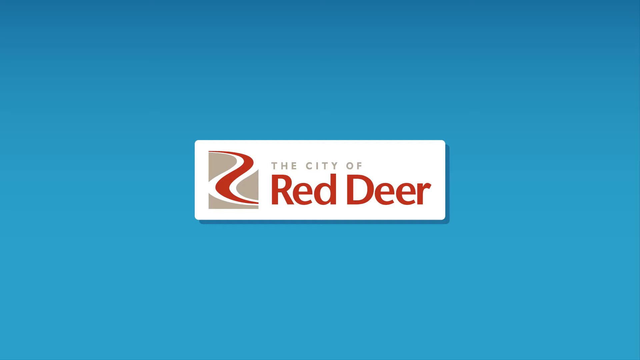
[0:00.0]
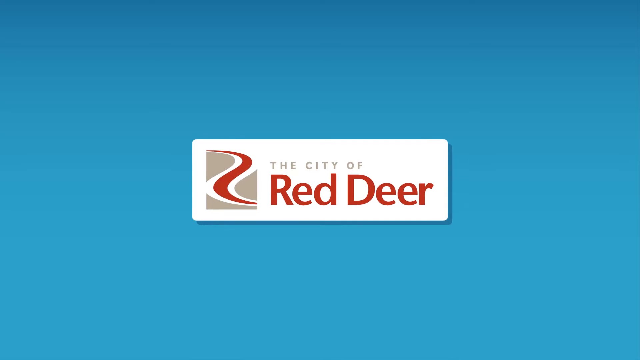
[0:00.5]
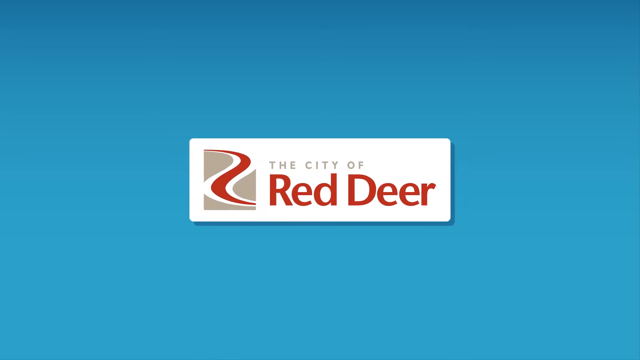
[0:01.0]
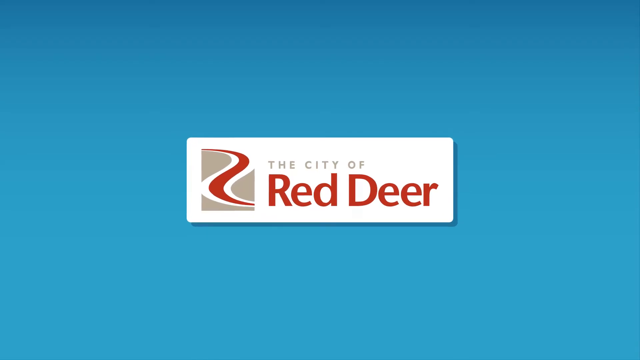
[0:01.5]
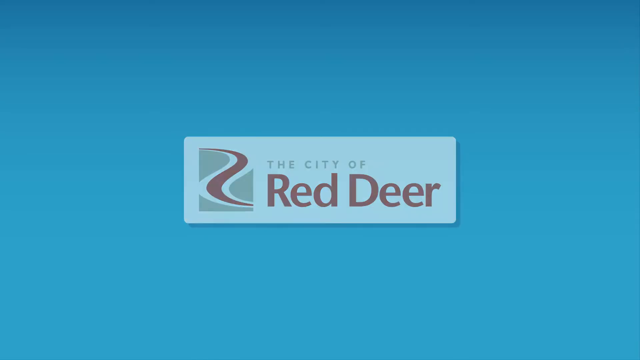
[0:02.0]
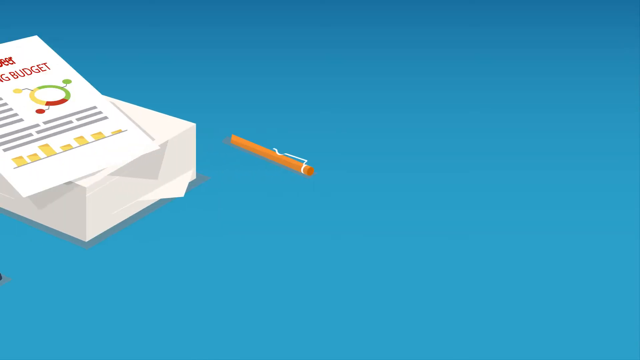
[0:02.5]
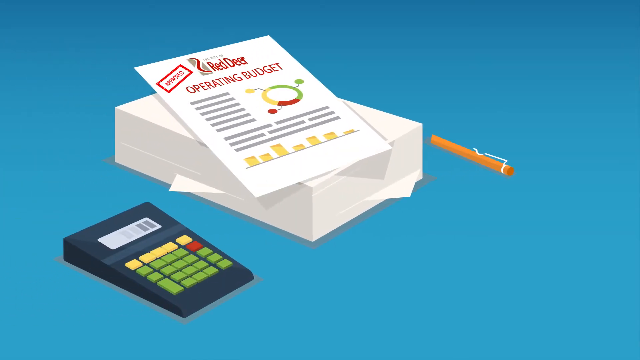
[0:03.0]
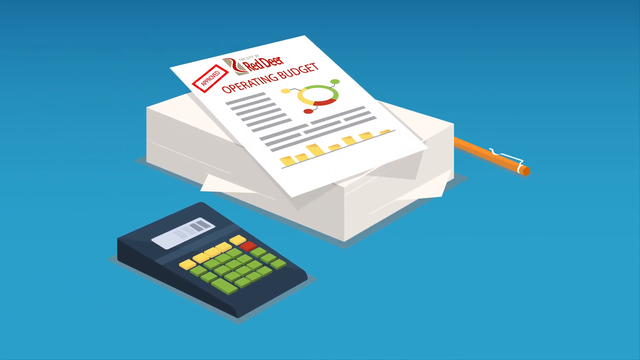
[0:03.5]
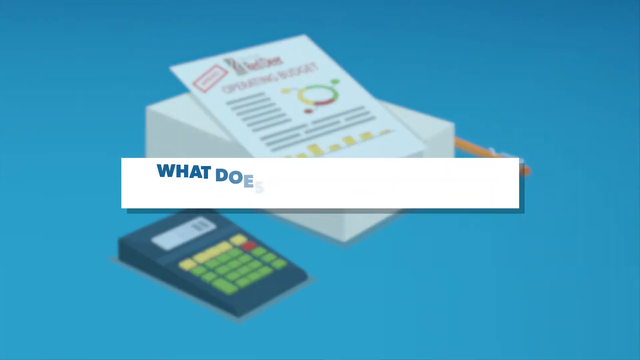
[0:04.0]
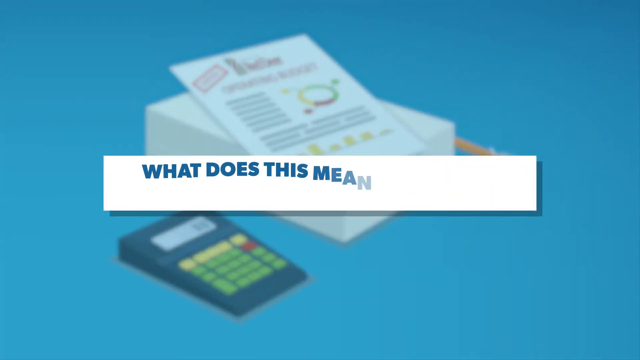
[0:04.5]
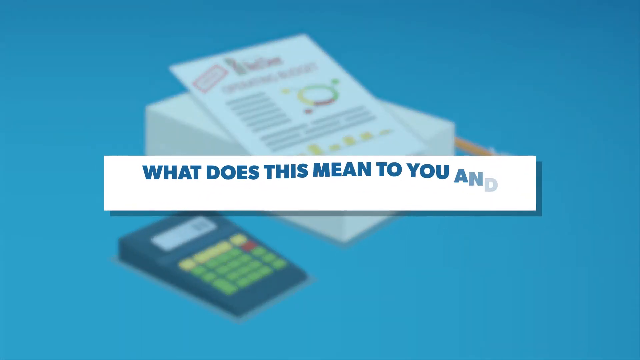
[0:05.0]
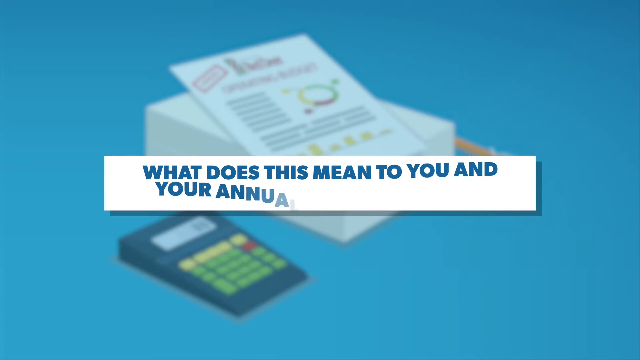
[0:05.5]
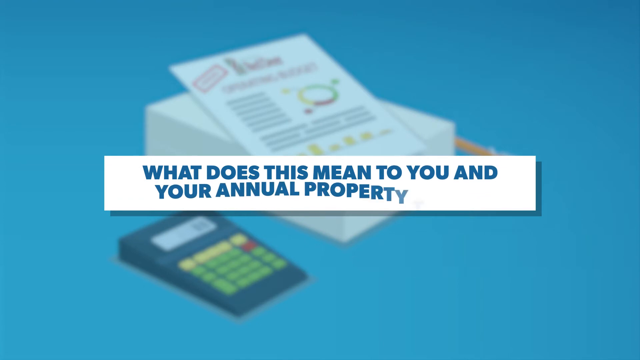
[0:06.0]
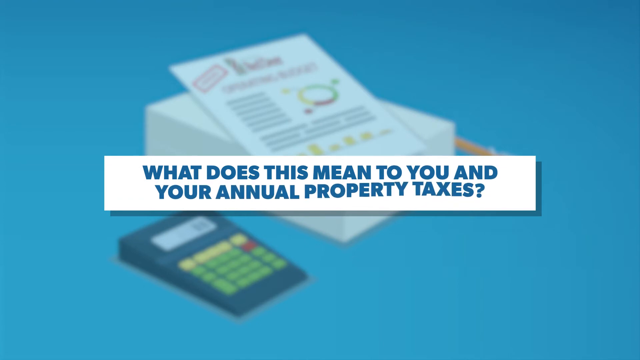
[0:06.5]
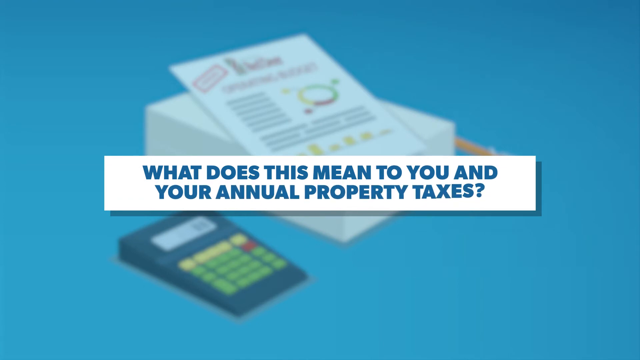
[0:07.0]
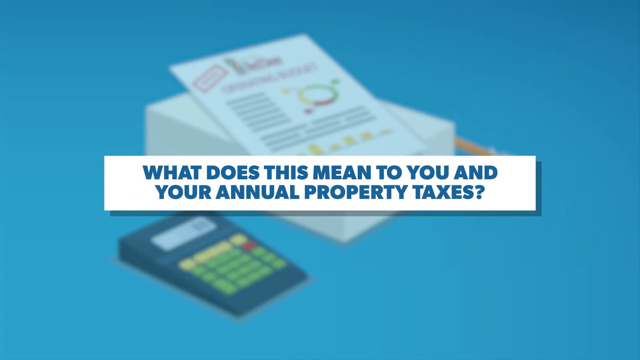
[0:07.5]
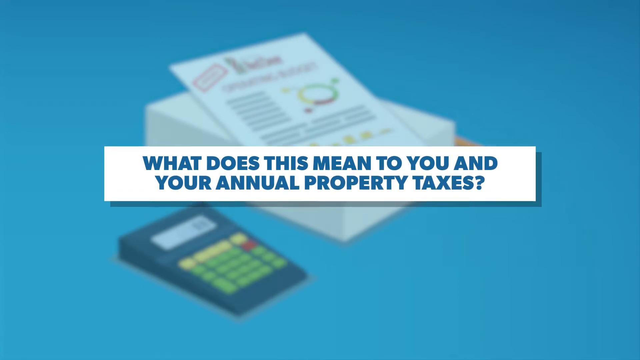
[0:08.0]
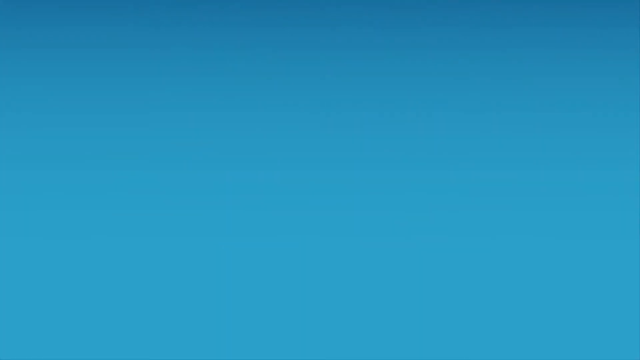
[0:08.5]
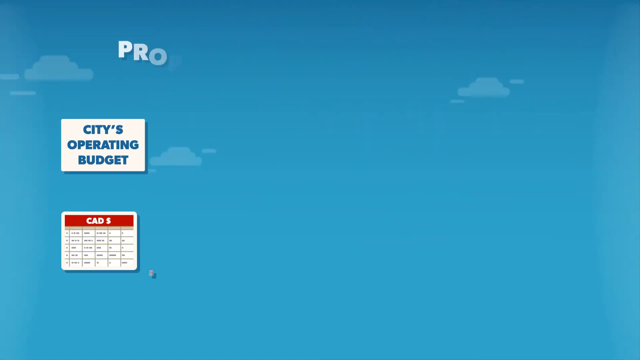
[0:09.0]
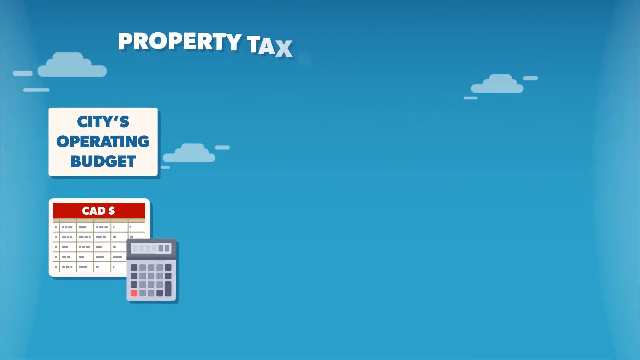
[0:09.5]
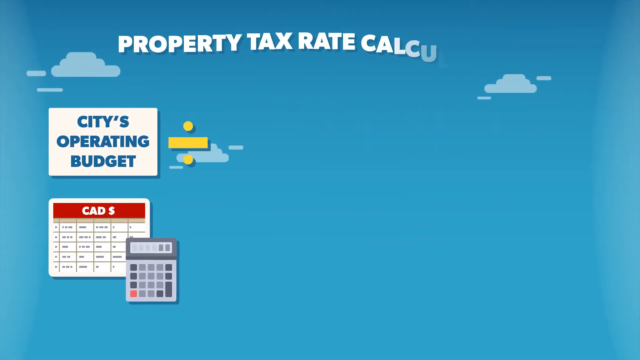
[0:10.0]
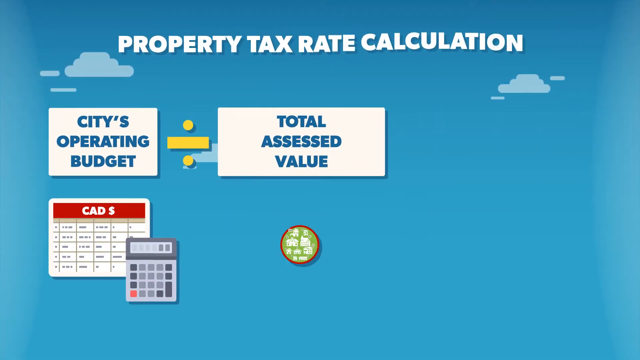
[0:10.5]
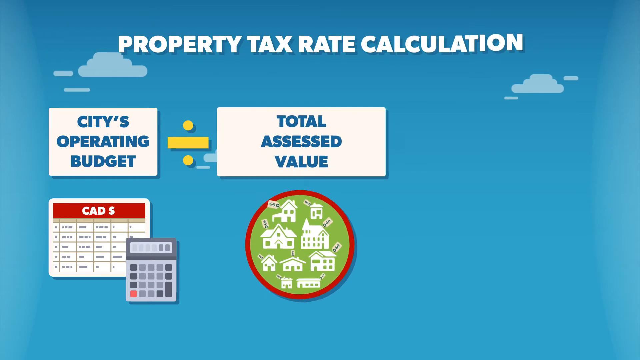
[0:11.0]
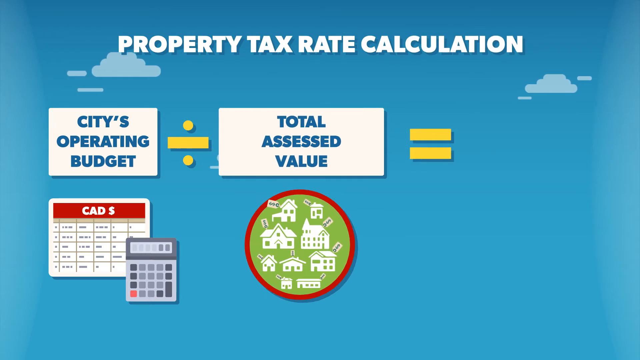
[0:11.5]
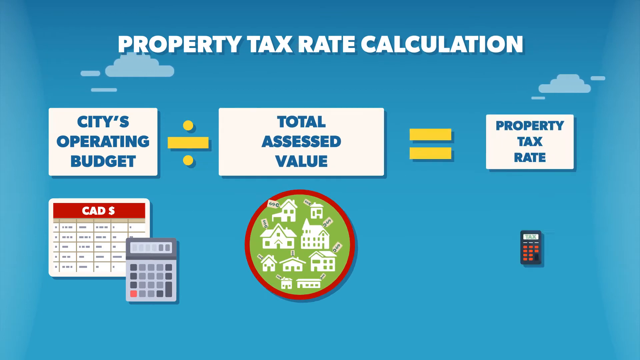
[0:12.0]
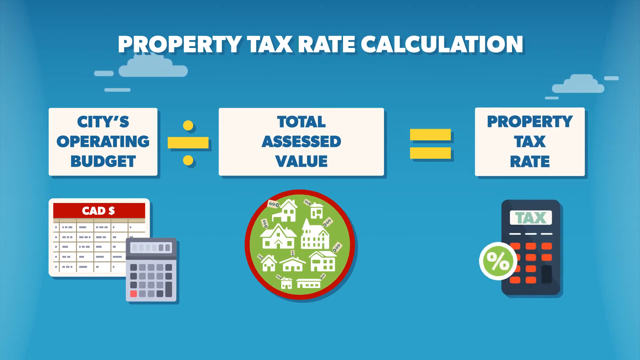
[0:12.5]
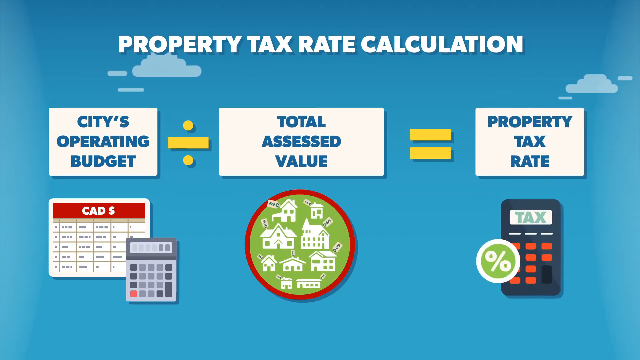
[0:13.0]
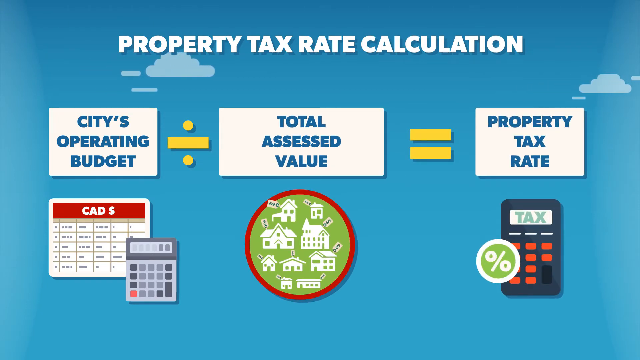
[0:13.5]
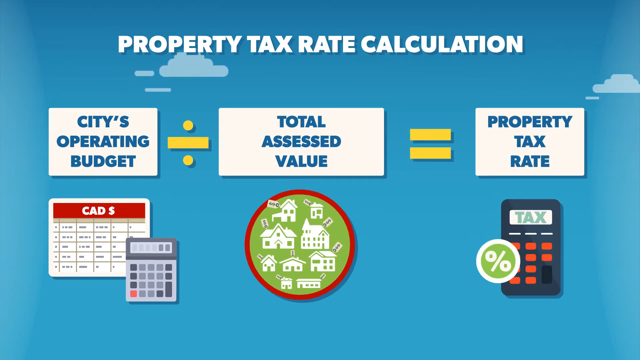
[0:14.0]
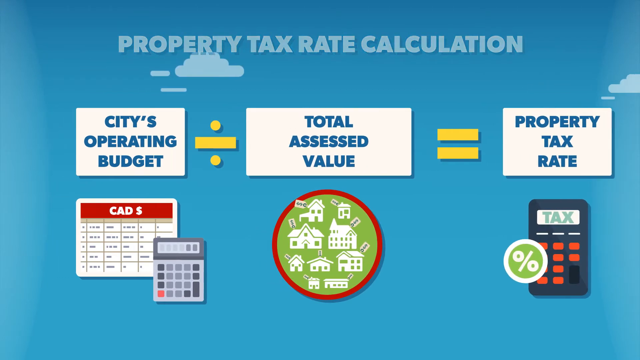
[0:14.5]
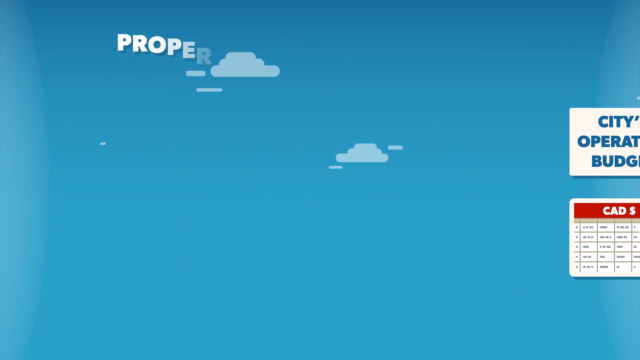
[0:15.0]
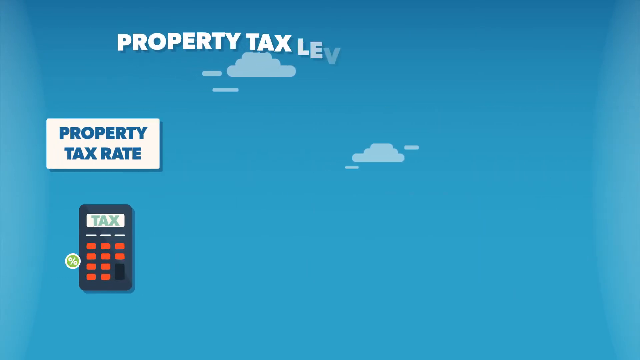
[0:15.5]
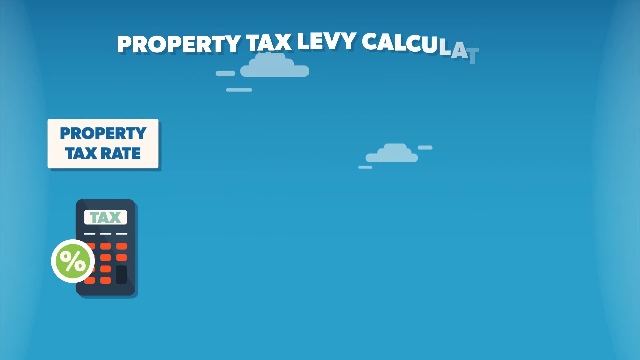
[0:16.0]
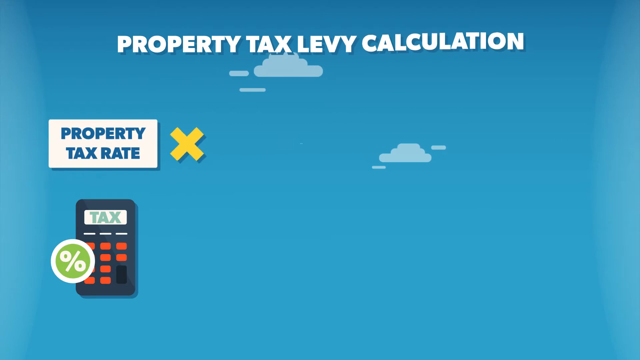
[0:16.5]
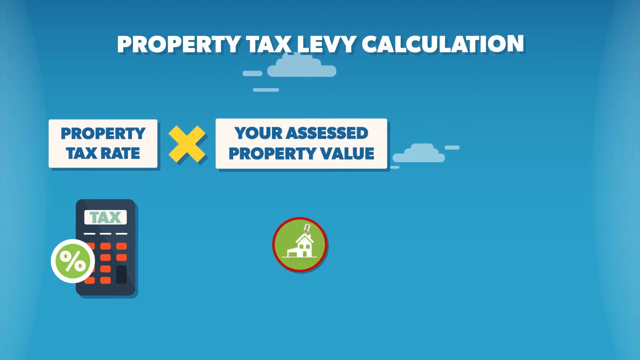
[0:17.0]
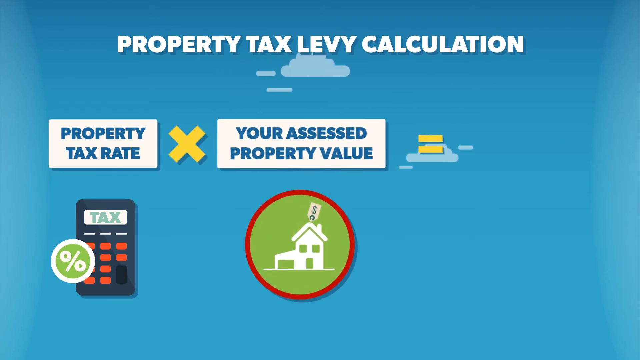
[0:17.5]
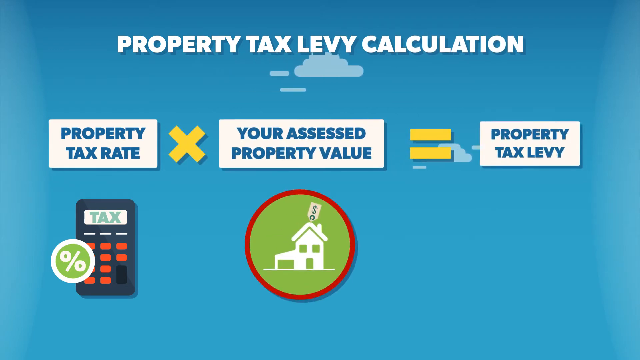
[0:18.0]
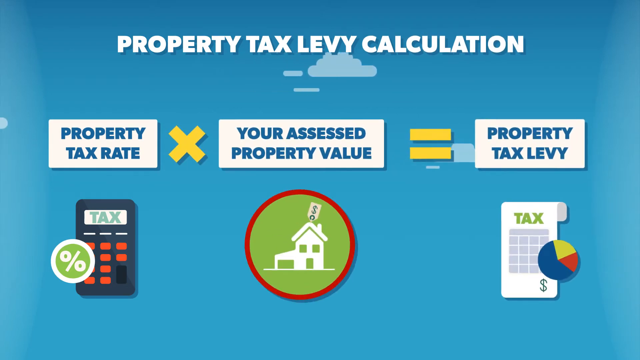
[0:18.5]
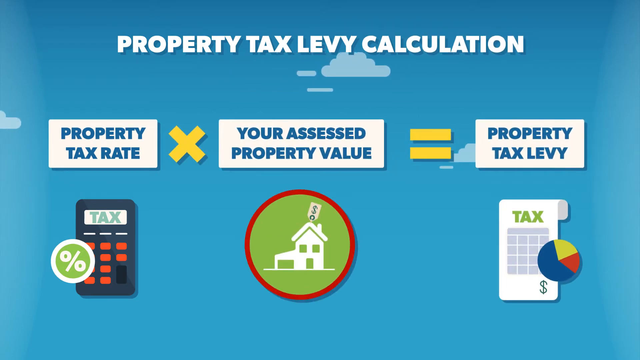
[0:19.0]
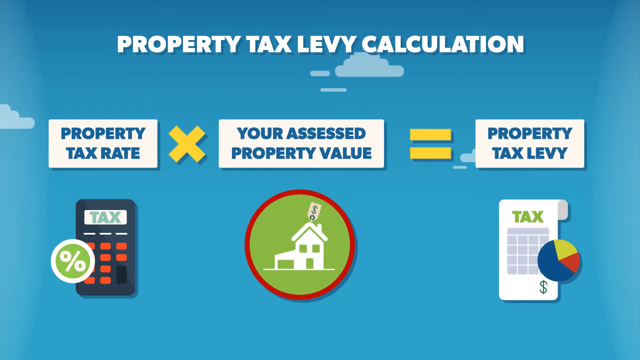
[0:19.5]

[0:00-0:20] The presentation appears to be from the city of Red Deer. It has a blue background with the city's logo in the middle. Next, a question appears: "what does it mean to you and your property taxes", with a calculator and a stack of documents in the background. A heading follows that reads "property tax rate calculation", and it is shown that dividing the city's operating budget by the total assessed value gives the property tax rate. An illustration then shows how to calculate the property tax levy: the property tax levy multiplied by the assessed property value gives the property tax. The background is sky blue with some moving clouds, and the illustrations are simple and uncluttered.